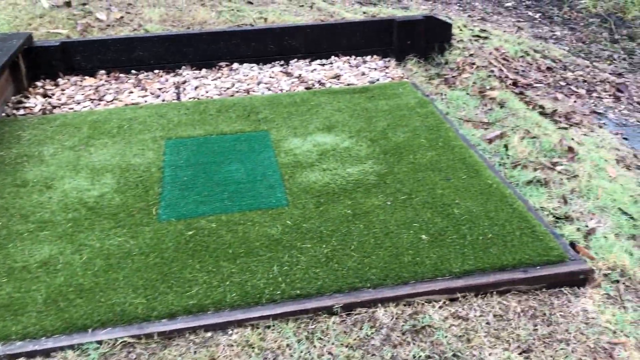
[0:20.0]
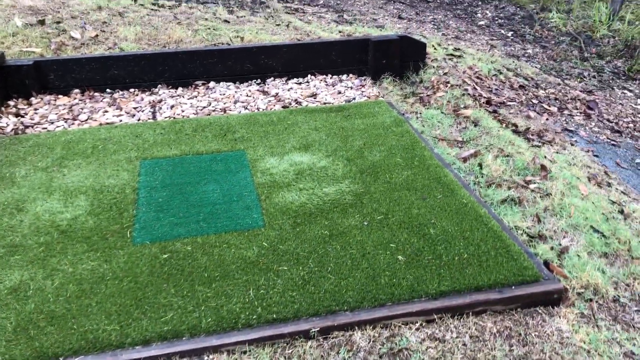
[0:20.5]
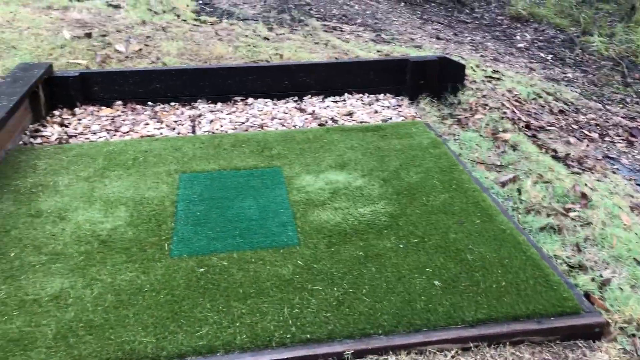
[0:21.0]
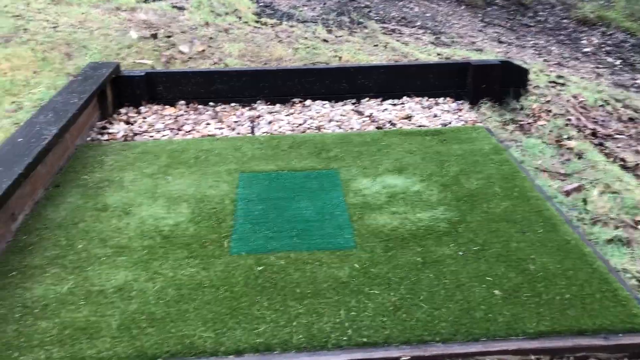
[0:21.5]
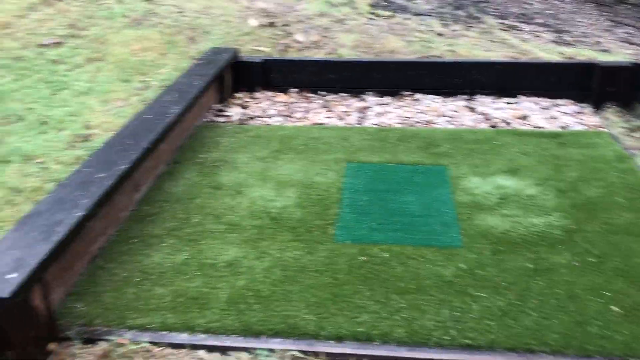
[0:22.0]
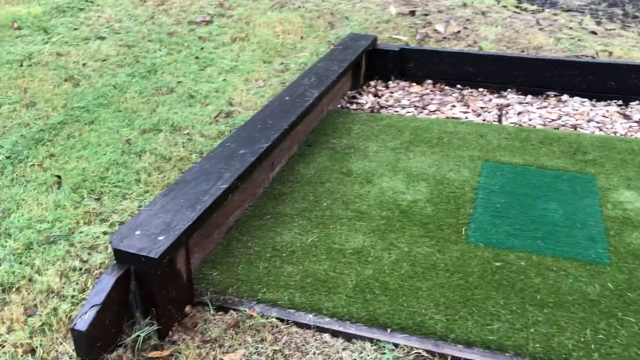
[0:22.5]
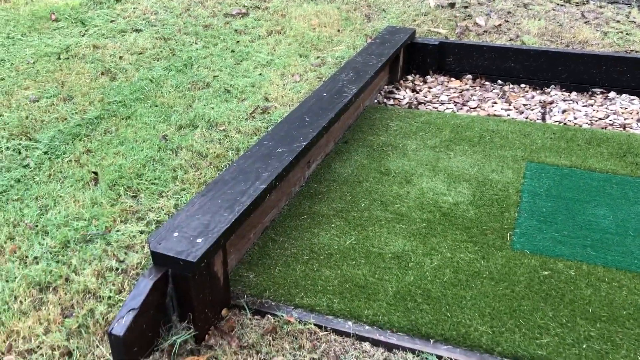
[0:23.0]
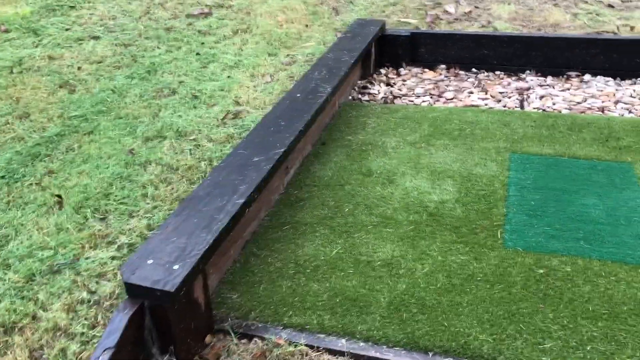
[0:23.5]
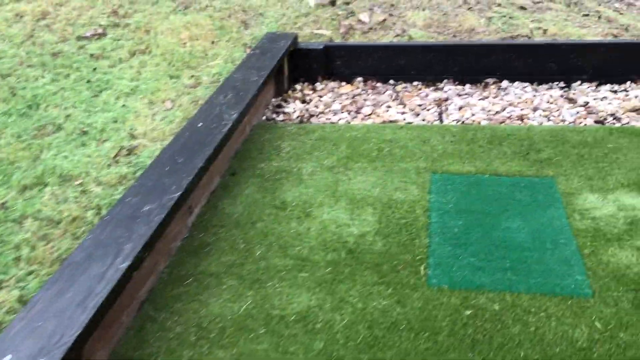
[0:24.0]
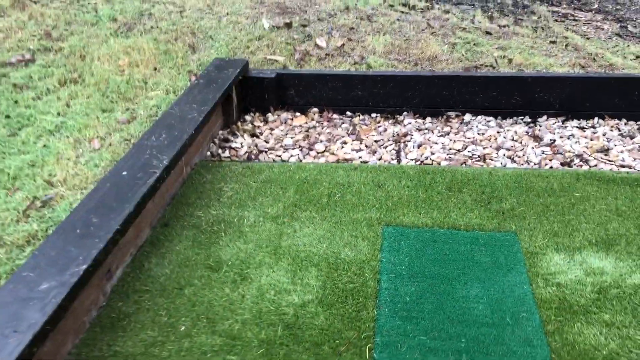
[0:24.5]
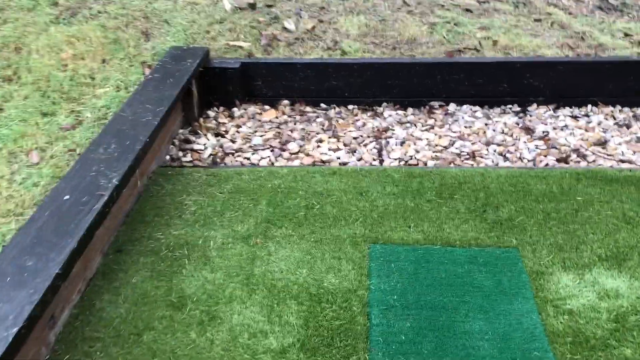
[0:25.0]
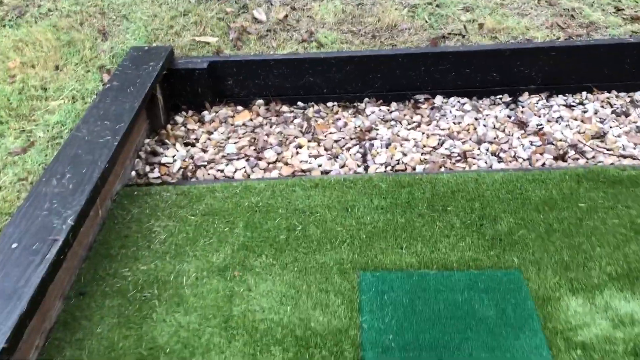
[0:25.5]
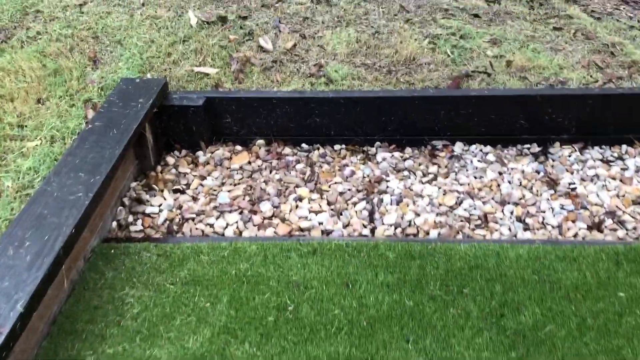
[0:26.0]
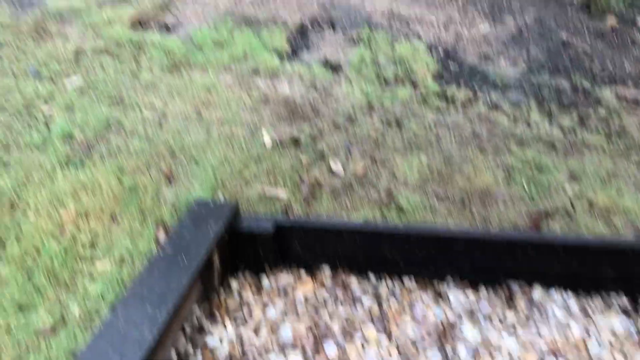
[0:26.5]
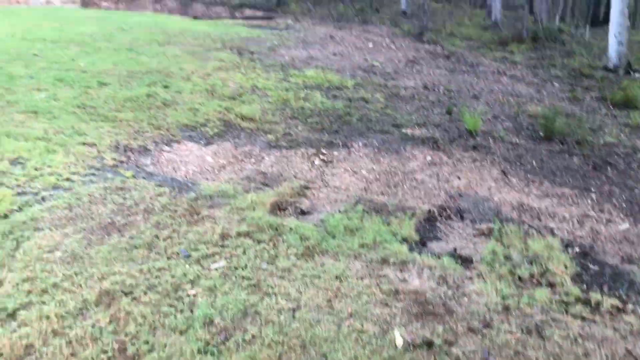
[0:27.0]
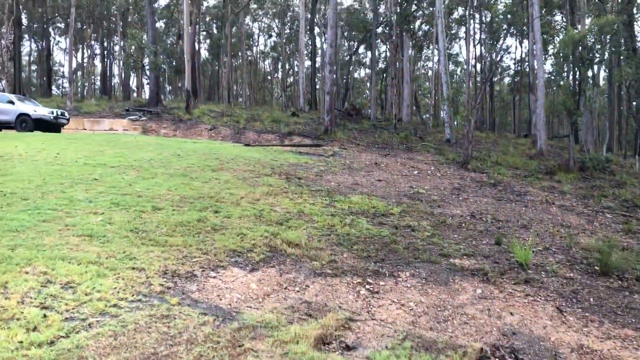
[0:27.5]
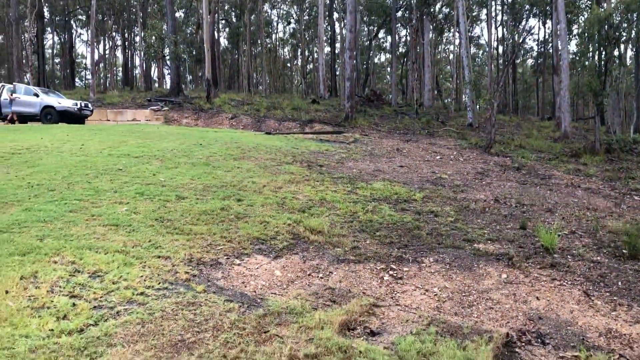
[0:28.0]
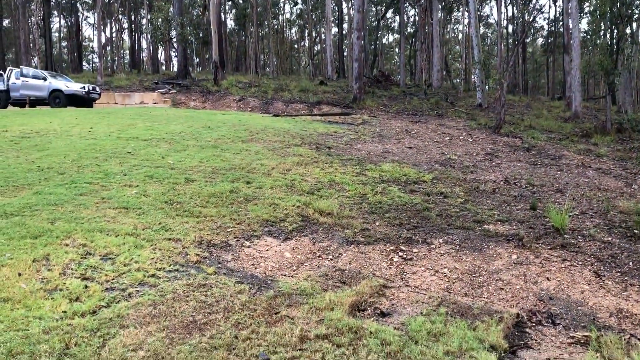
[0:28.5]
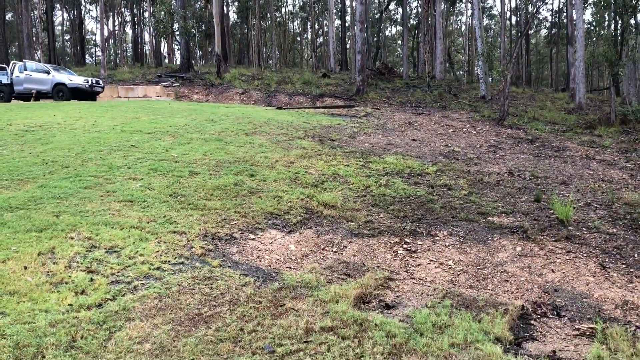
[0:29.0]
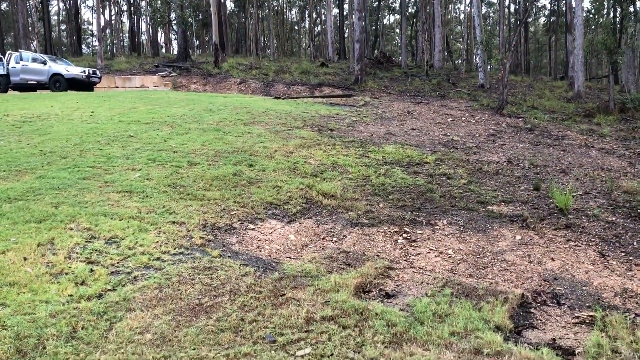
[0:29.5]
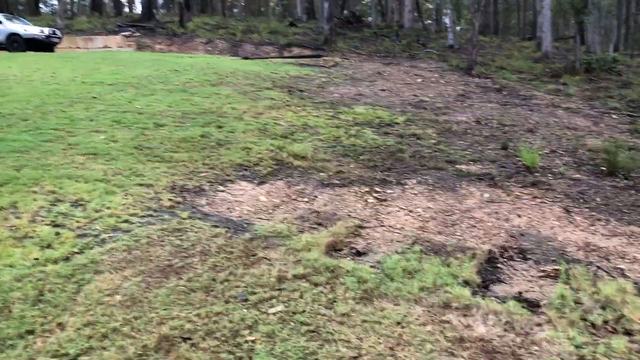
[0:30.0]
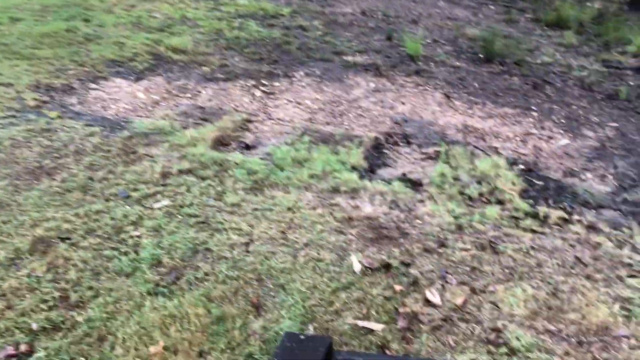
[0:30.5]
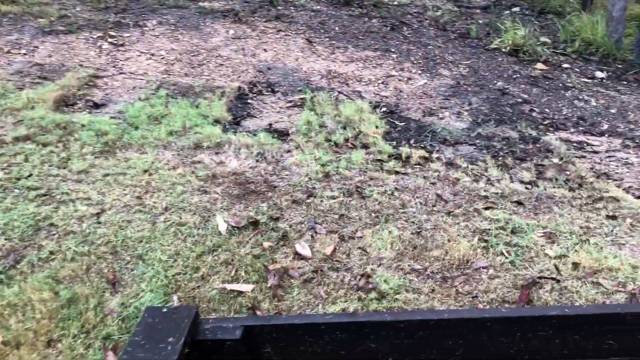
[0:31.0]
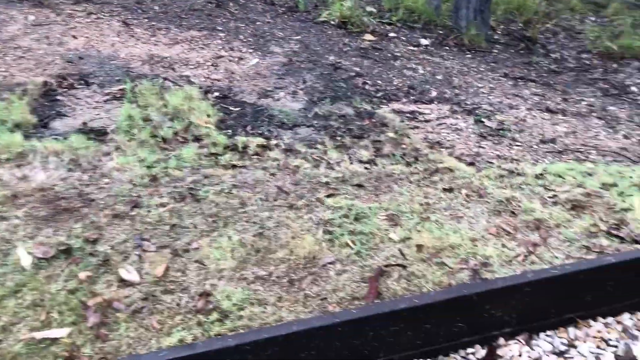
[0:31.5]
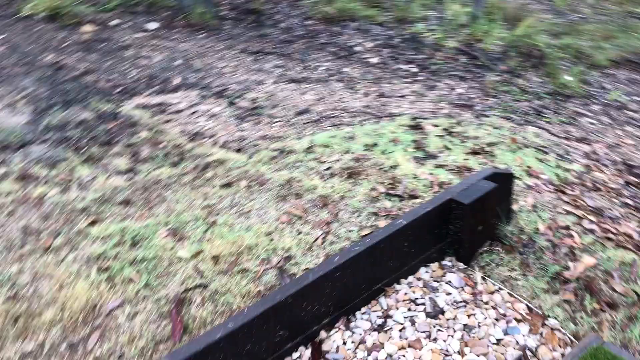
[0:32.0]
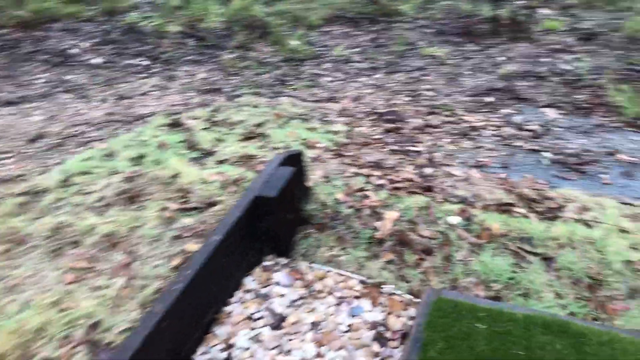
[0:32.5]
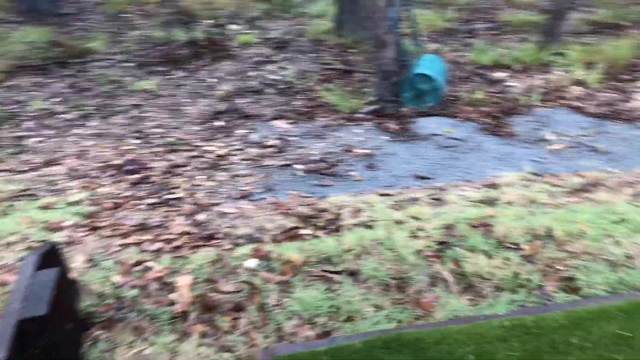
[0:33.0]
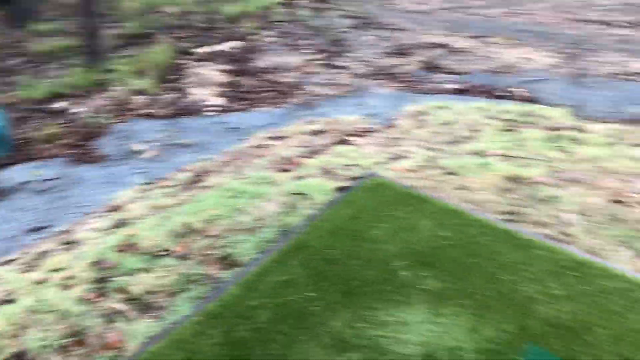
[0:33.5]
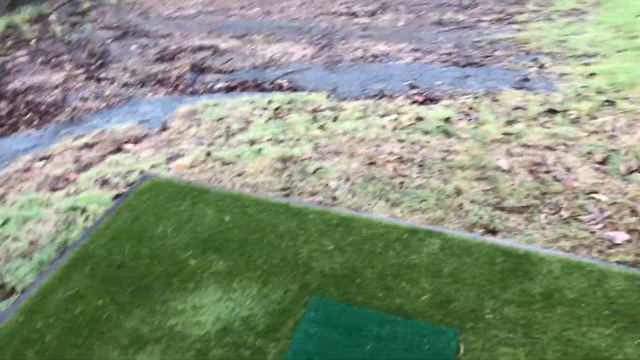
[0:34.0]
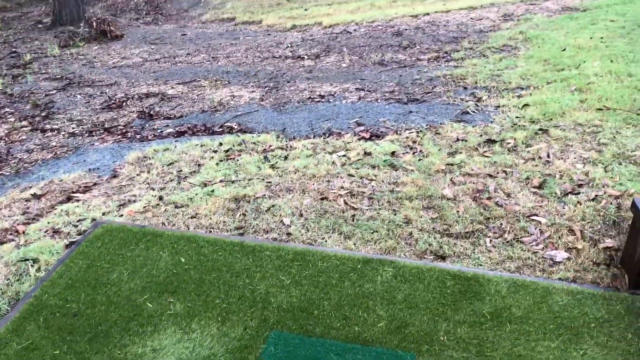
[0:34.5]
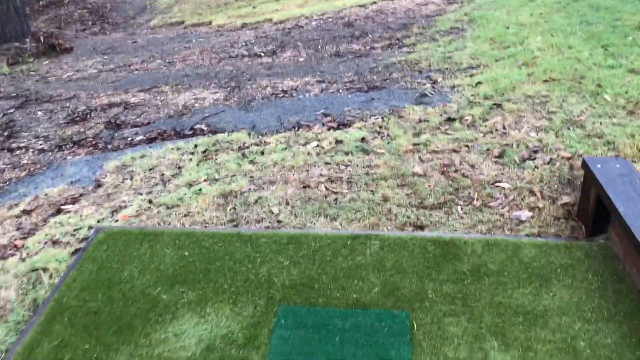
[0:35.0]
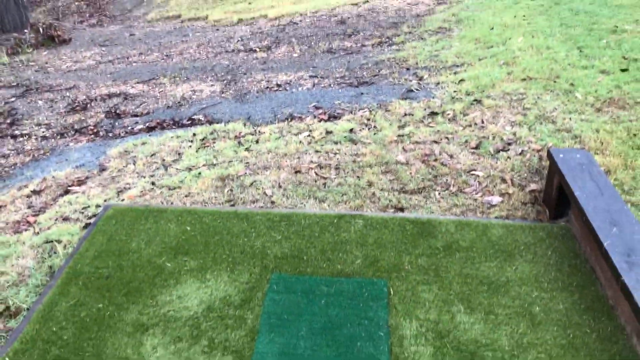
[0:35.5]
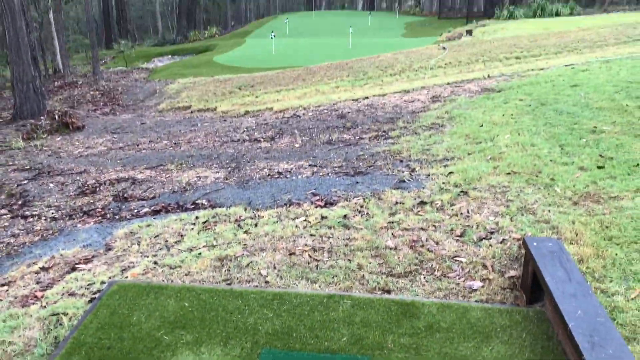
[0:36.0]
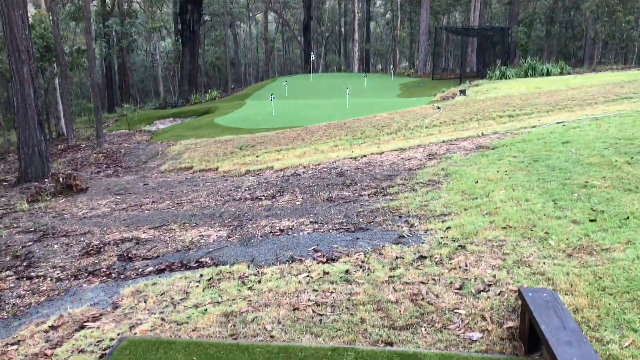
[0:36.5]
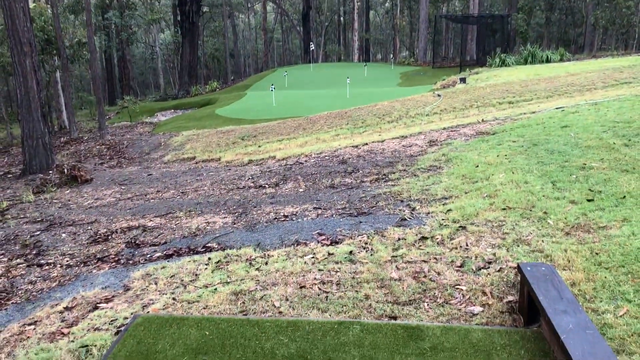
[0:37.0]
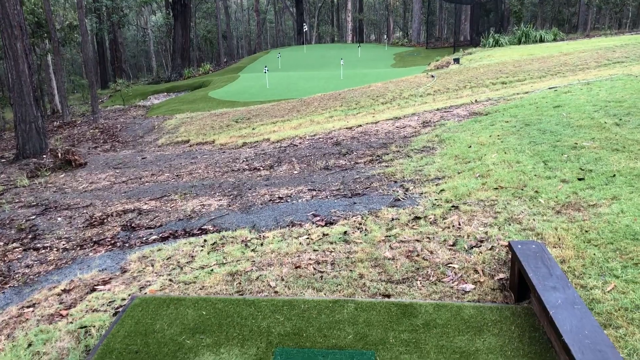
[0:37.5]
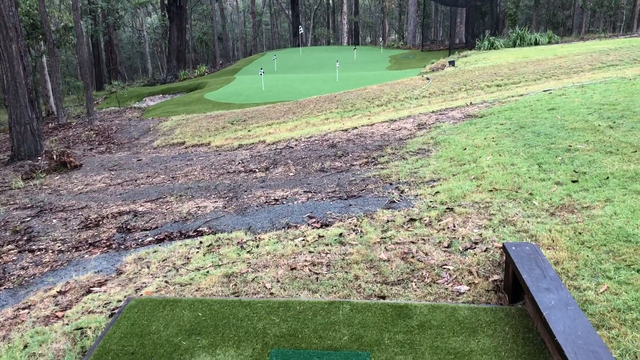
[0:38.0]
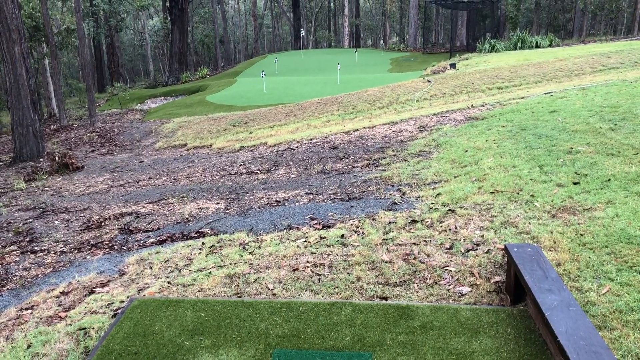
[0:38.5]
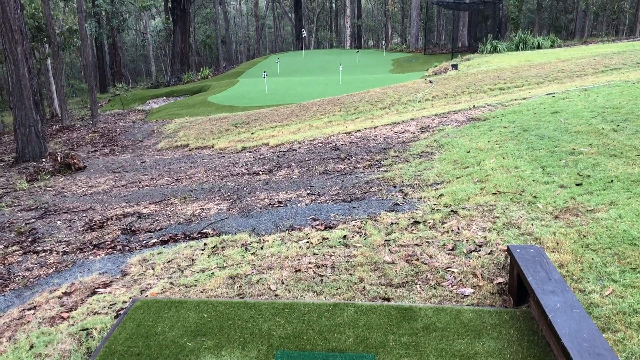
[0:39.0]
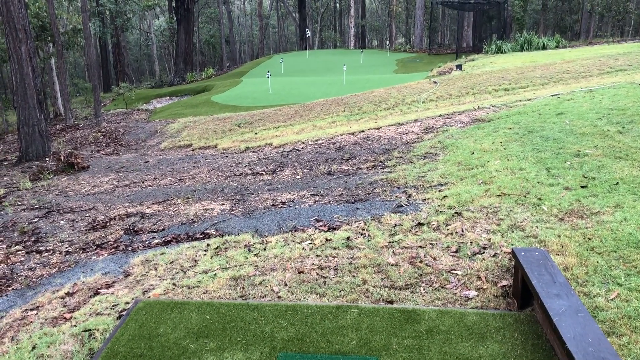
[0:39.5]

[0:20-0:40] The view shows an outdoor structure, probably around three by five, with a green astroturf surface. In the middle, probably a one by one, is a patch of astroturf with less coarse formations. Wood painted black is raised around the back and the left side. The grass fades from green to brown, and some of it is dying. This appears to be a place to tee off for golf. The rocks shown are basically white and brown. There is a wooded area behind, and a silver vehicle is in the distance.